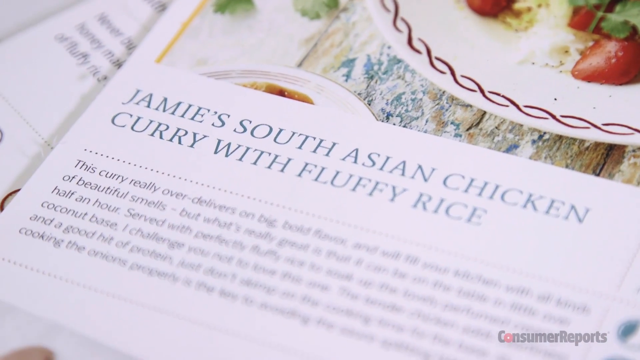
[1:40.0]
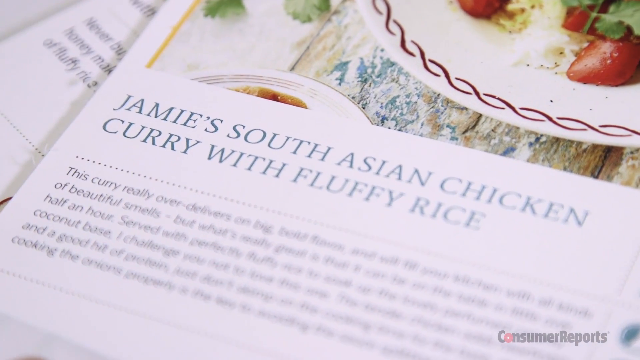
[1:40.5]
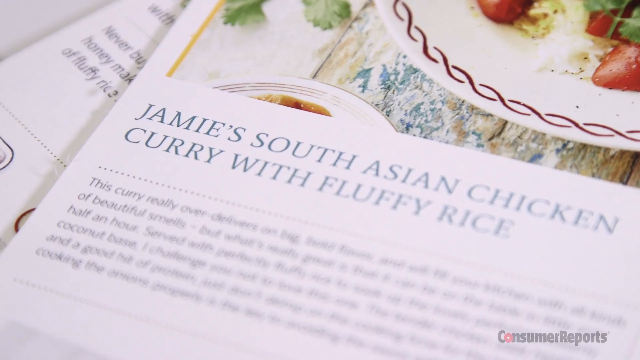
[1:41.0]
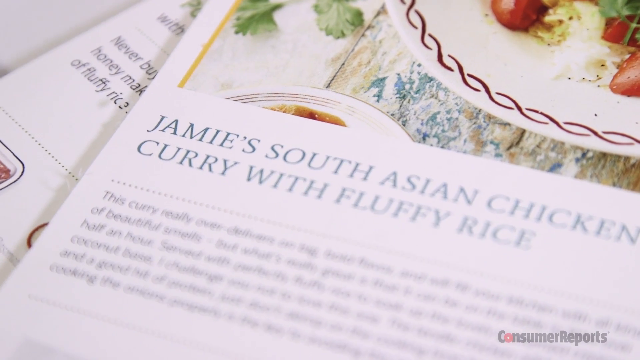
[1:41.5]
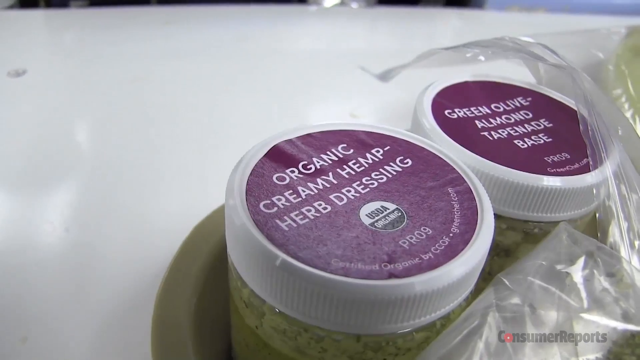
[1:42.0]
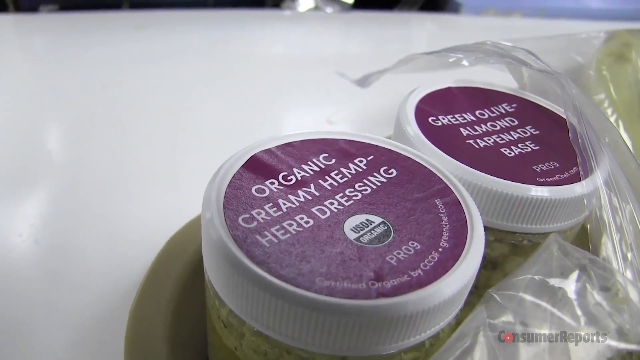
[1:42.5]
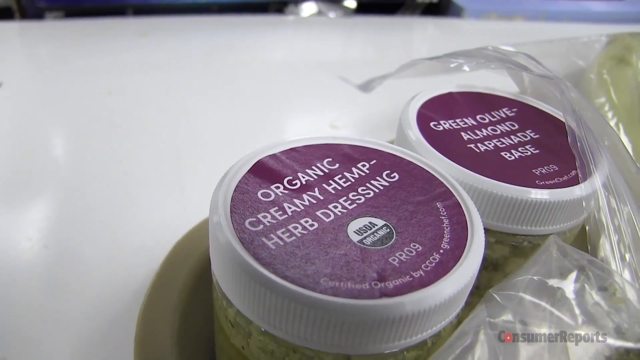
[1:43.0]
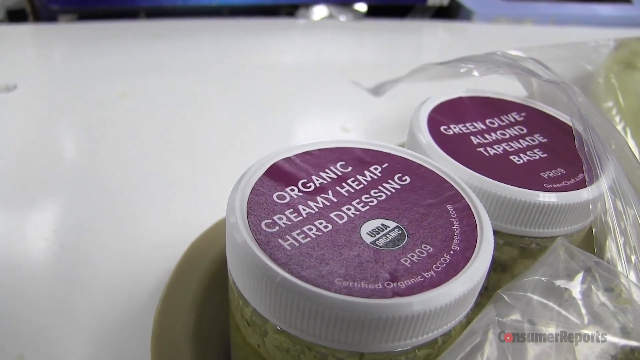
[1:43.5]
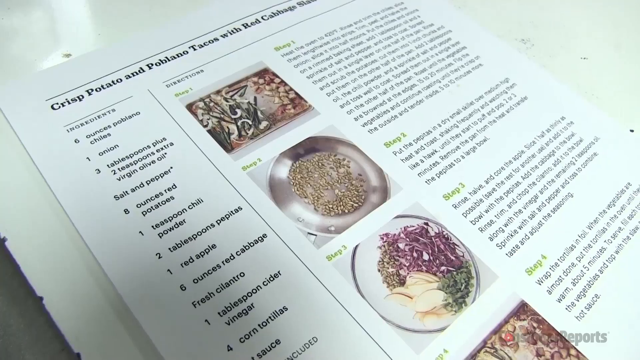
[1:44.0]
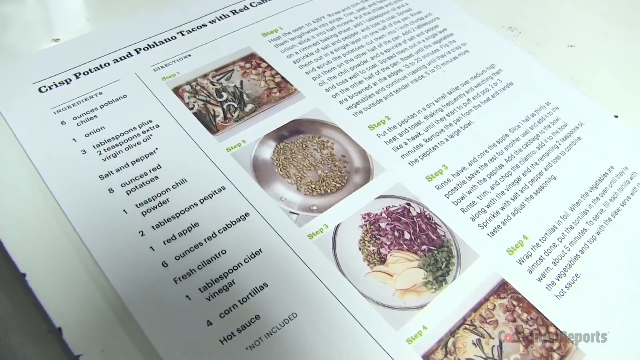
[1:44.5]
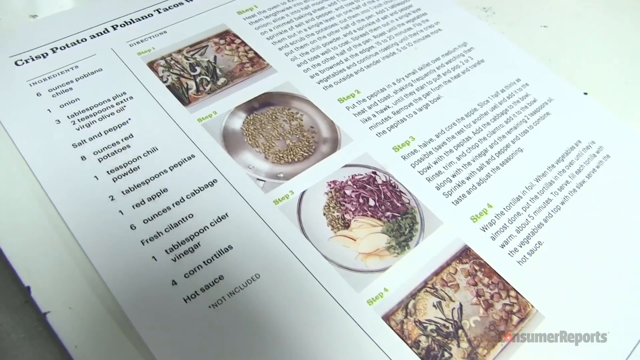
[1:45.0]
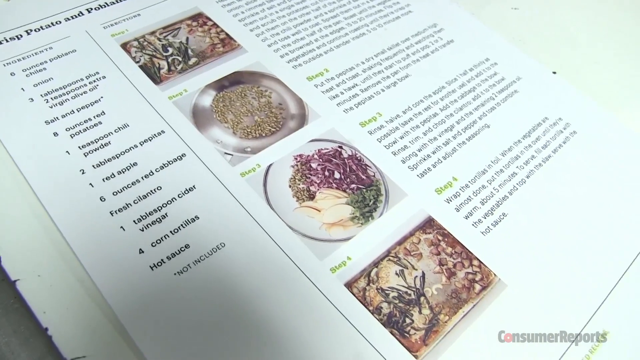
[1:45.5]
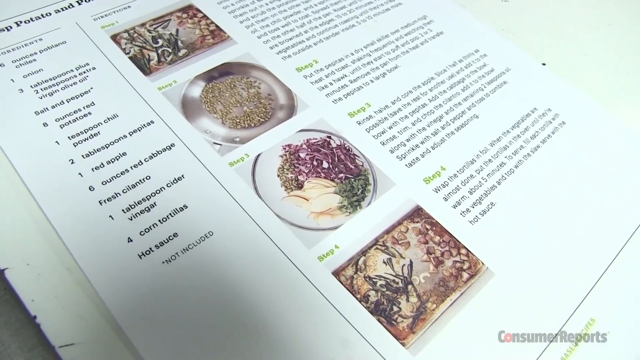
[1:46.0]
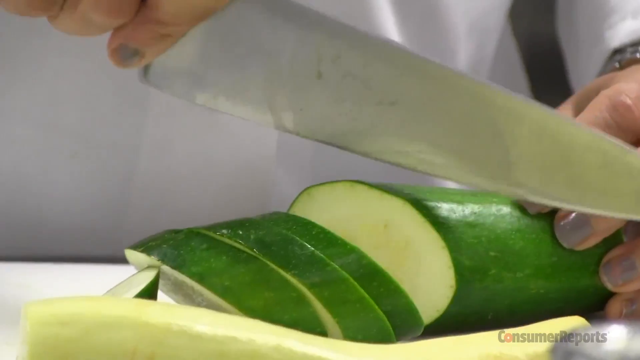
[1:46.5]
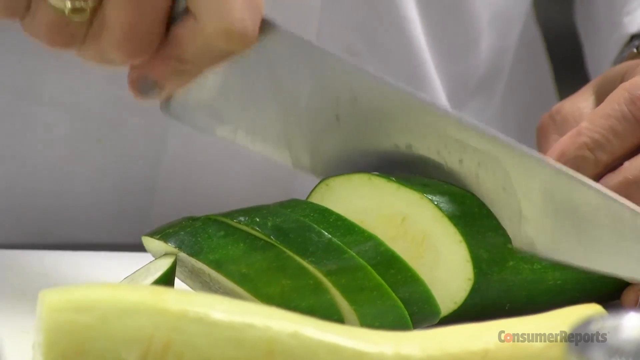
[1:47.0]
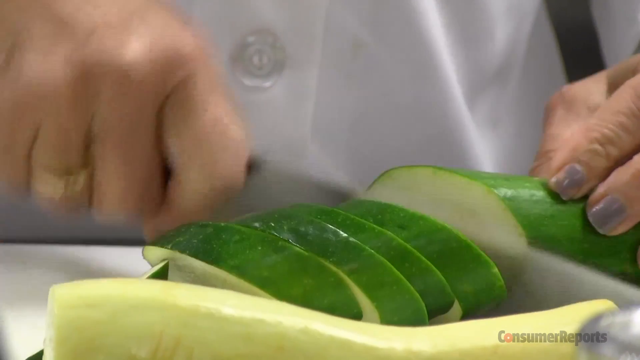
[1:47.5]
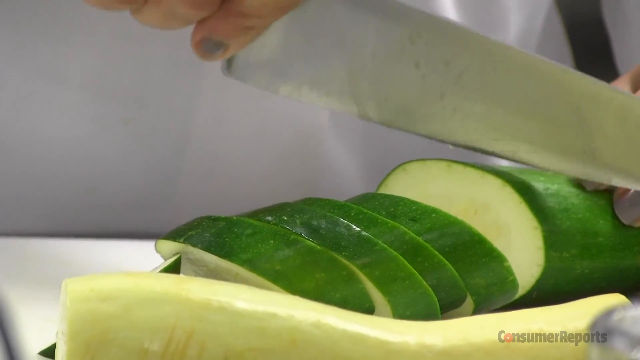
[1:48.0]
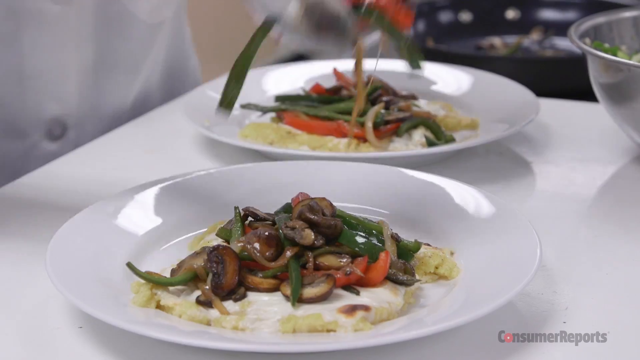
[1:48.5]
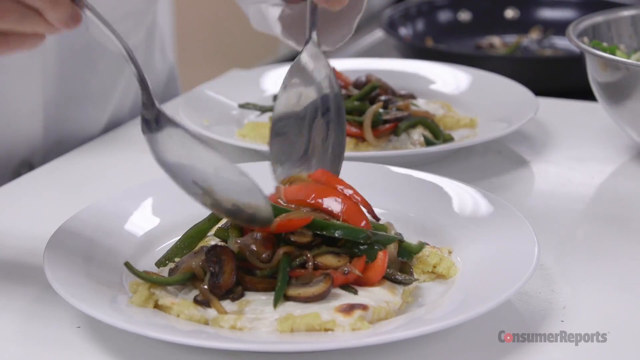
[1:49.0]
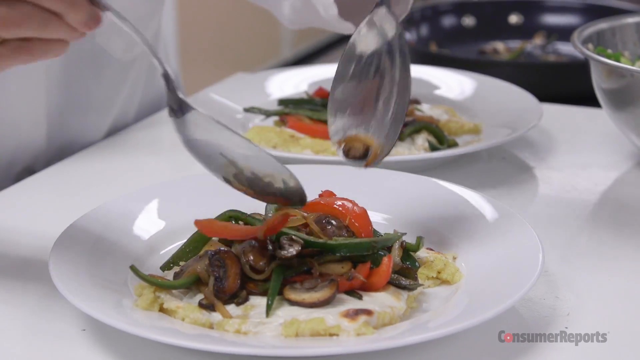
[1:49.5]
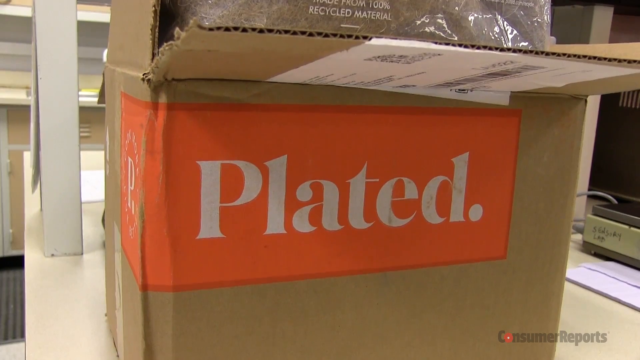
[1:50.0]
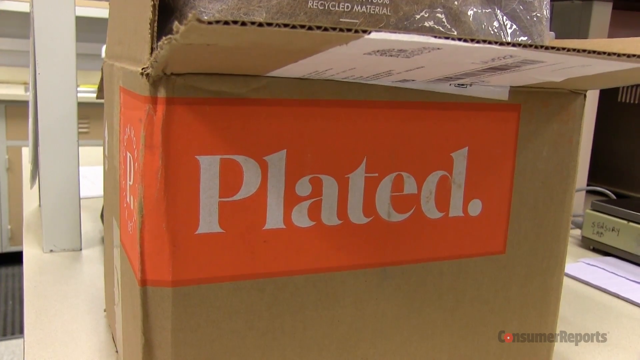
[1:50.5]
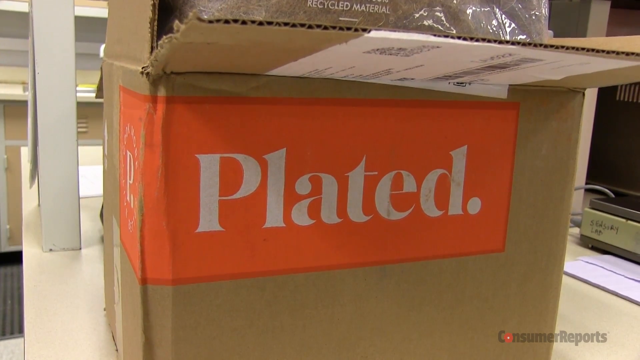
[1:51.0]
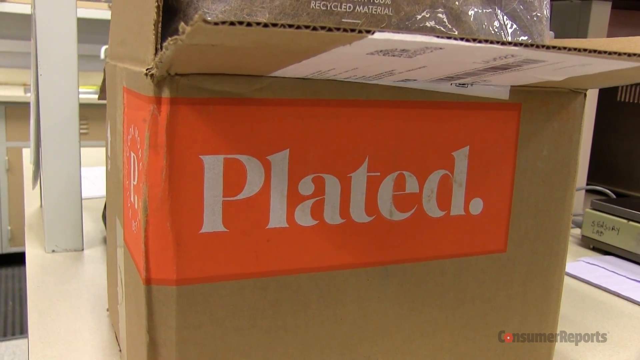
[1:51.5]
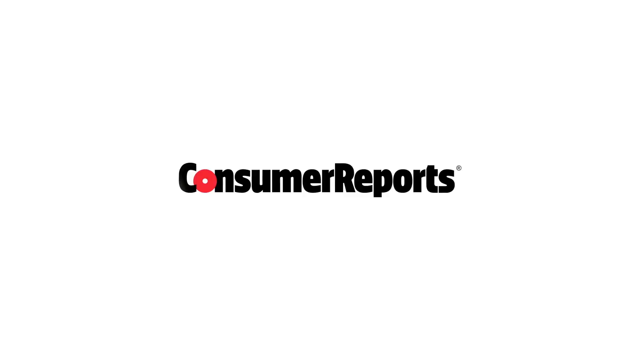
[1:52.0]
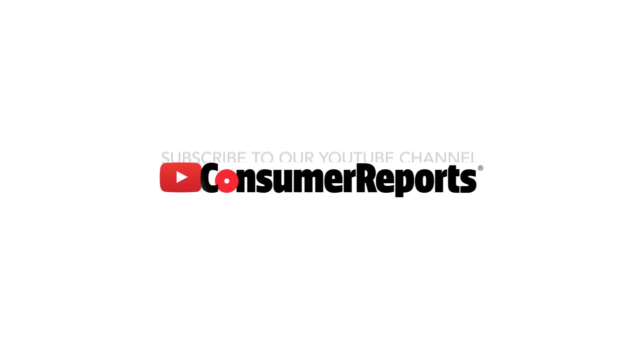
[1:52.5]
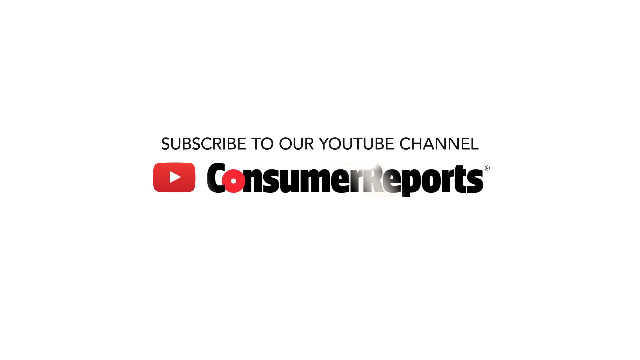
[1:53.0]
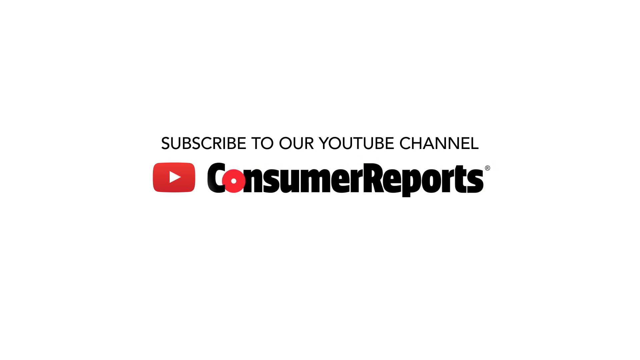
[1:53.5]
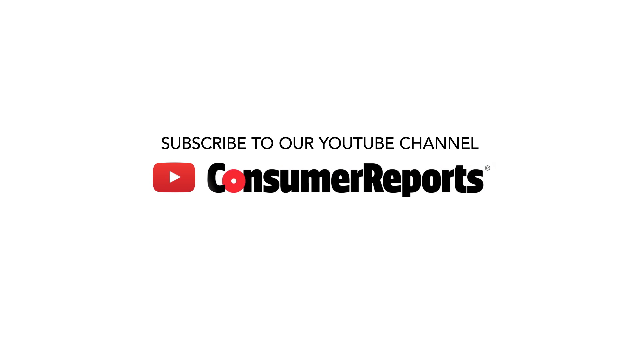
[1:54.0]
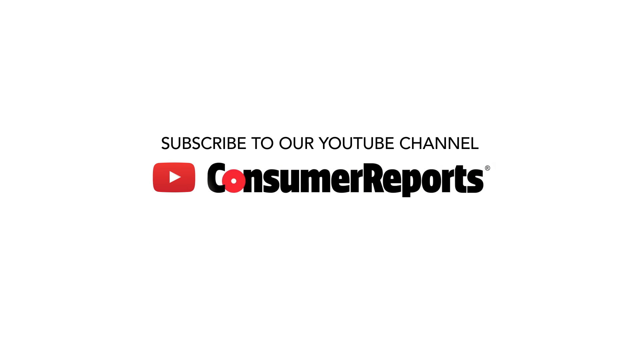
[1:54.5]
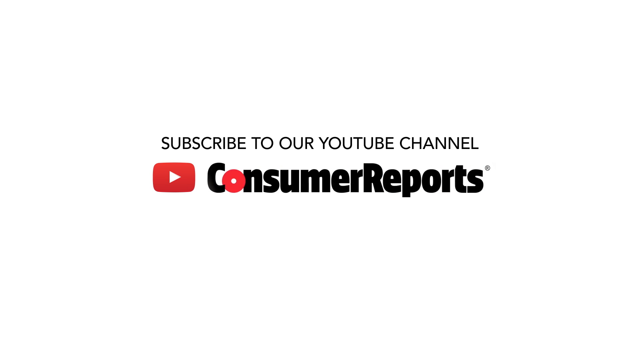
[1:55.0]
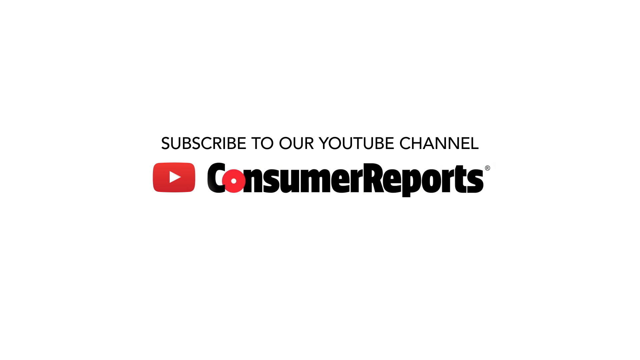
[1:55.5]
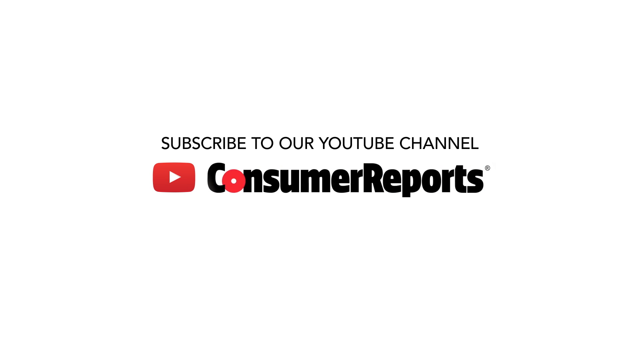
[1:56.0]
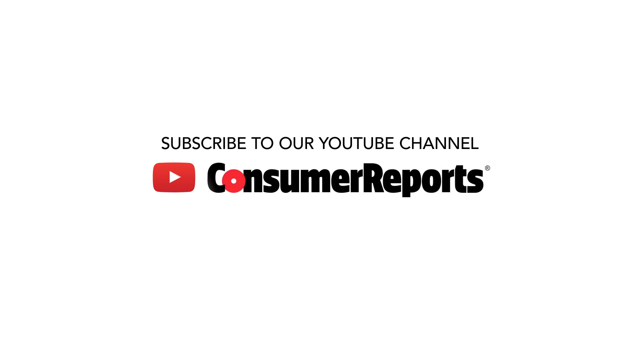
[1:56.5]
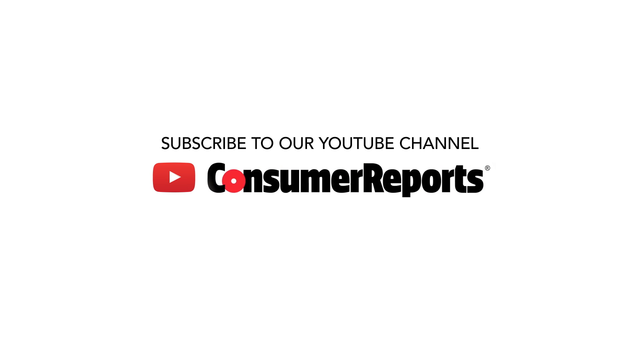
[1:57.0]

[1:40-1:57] The Consumer Reports name appears in the bottom right-hand corner in black lettering, with the O in Consumer in red. Writing reads "Jamie's South Asian chicken curry with fluffy rice". Next come "Organic Creamy Herb Dressing", "USDA Organic" and "Green Olive Almond Tapenade Base". In the top left-hand corner, text reads "crisp potato and poblano tacos with red cabbage". Someone then cuts up a cucumber and finishes the plate.